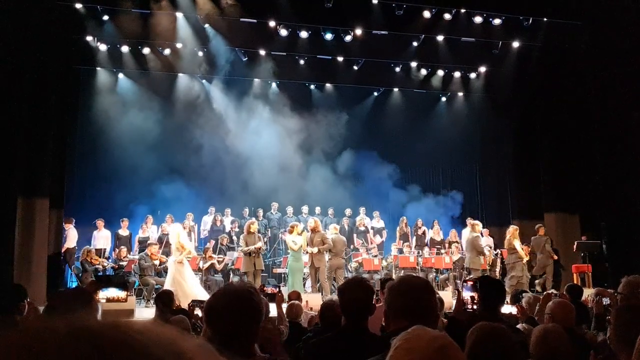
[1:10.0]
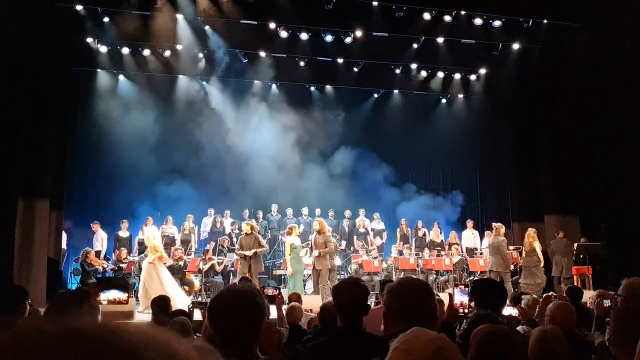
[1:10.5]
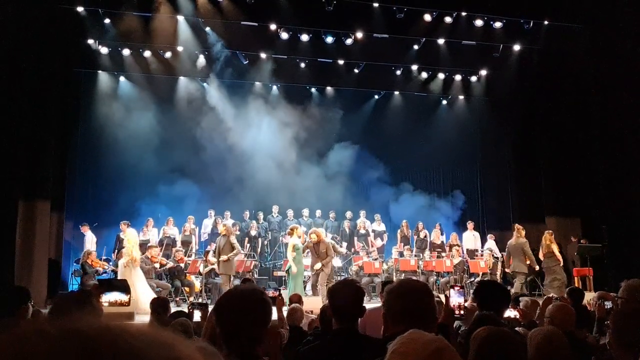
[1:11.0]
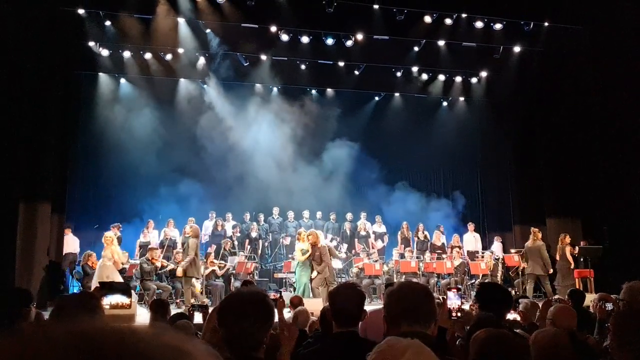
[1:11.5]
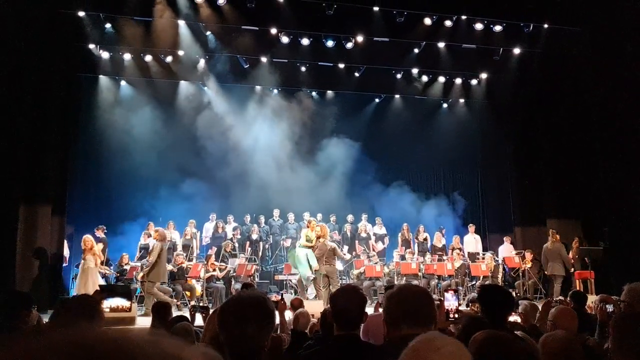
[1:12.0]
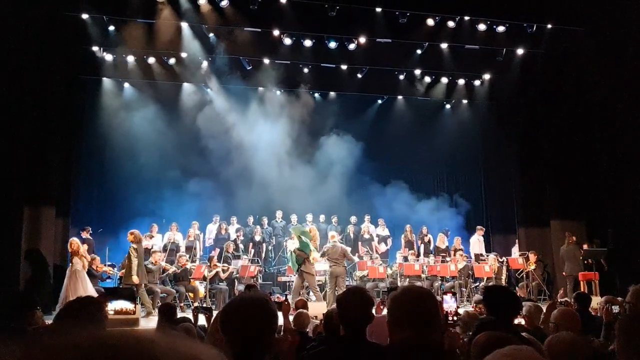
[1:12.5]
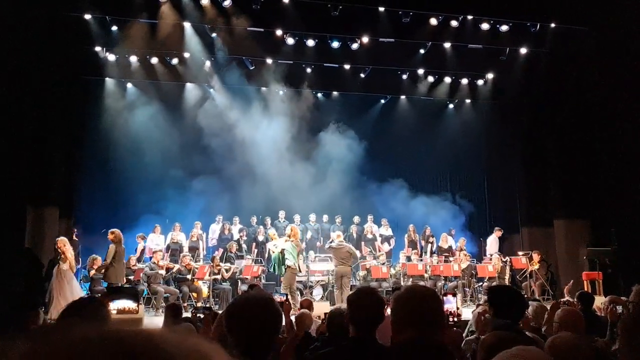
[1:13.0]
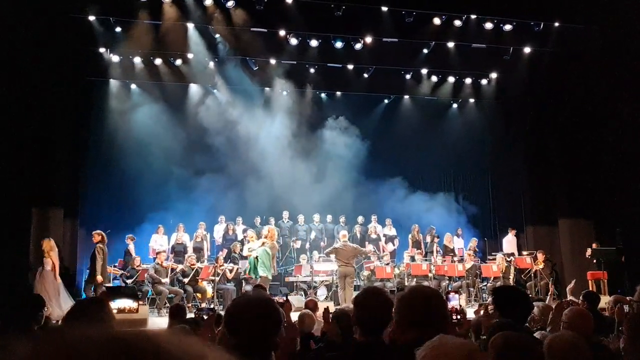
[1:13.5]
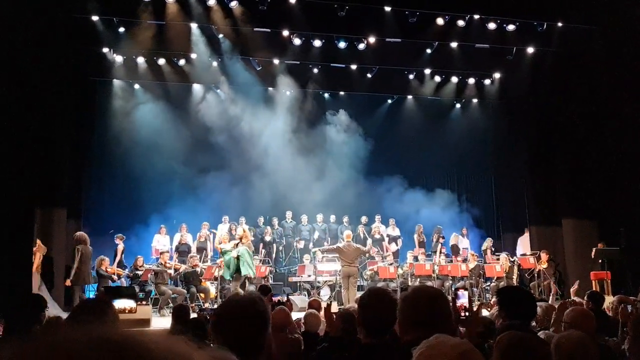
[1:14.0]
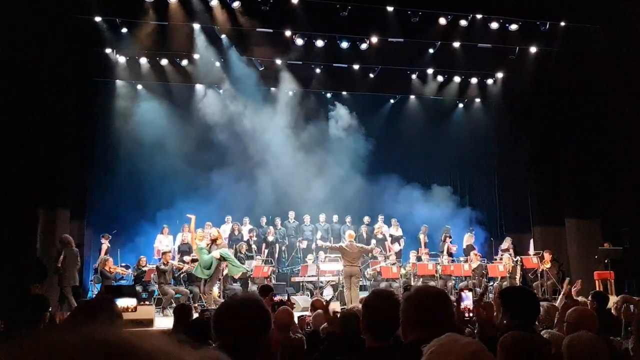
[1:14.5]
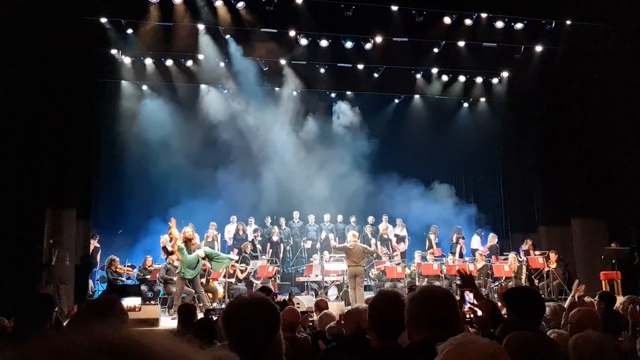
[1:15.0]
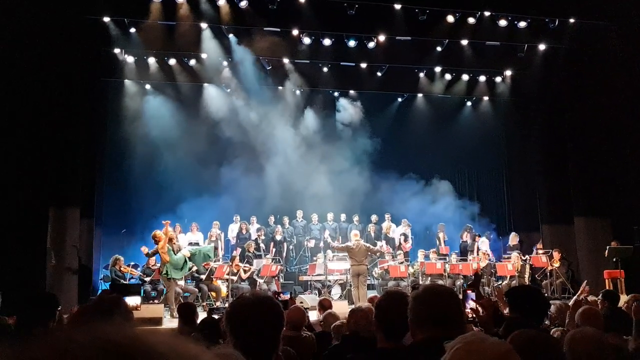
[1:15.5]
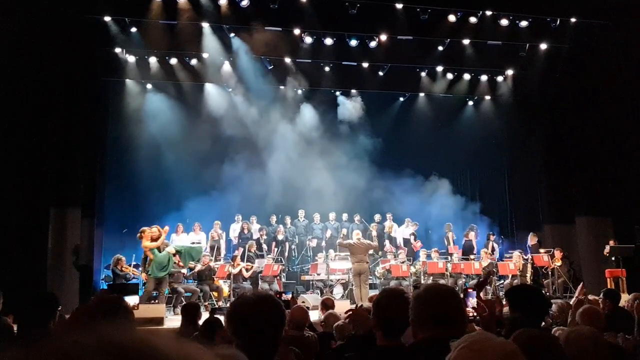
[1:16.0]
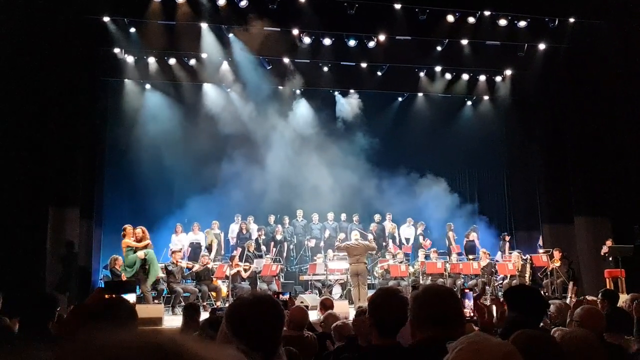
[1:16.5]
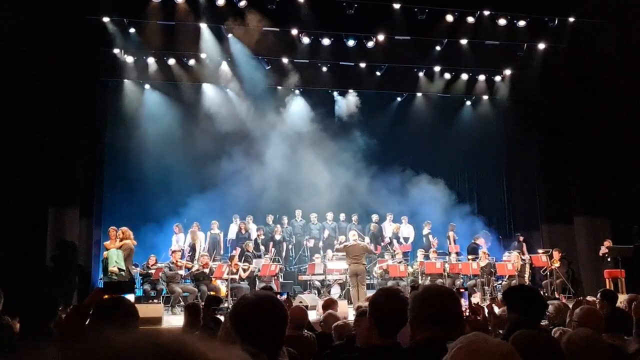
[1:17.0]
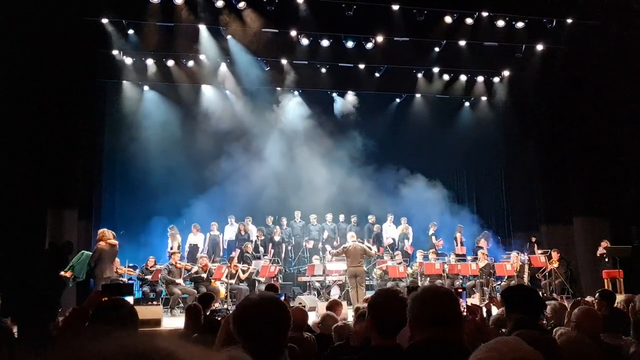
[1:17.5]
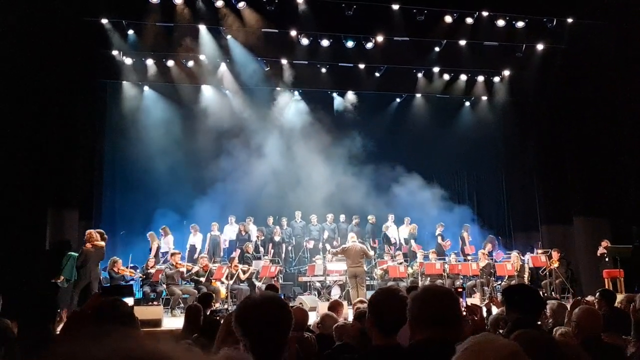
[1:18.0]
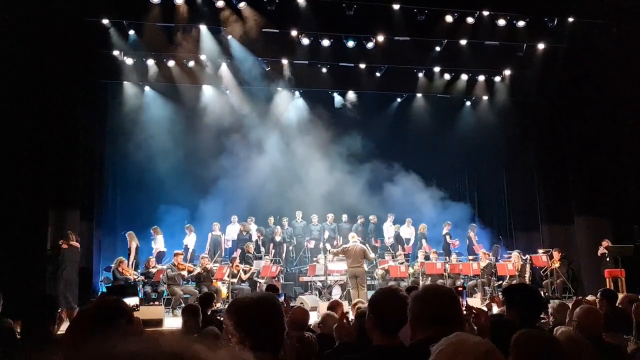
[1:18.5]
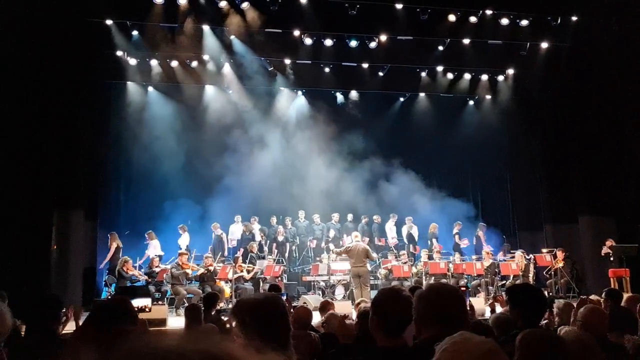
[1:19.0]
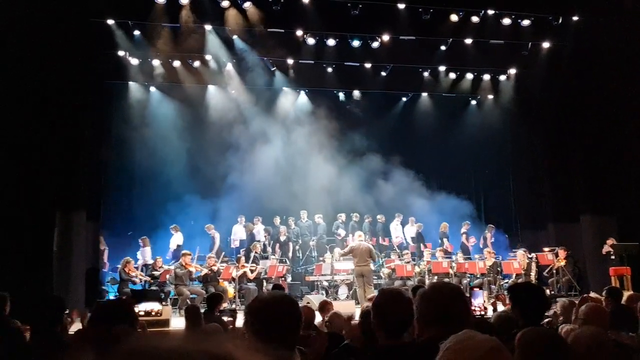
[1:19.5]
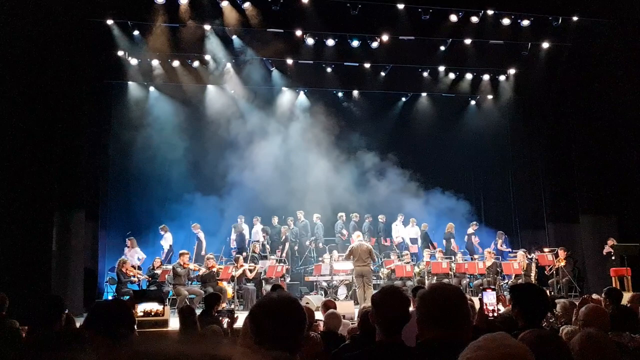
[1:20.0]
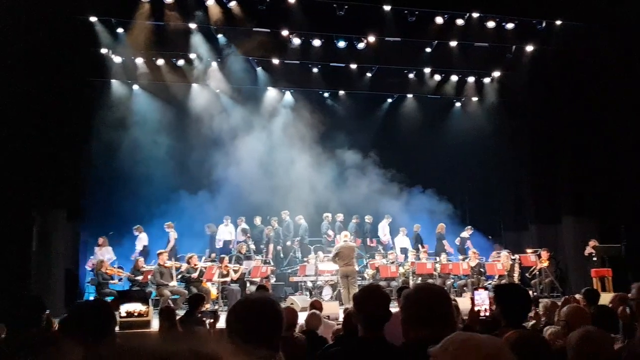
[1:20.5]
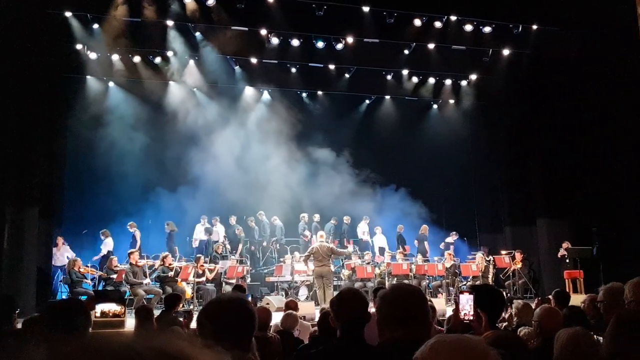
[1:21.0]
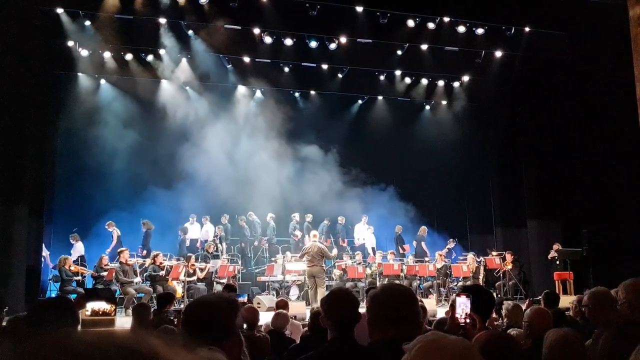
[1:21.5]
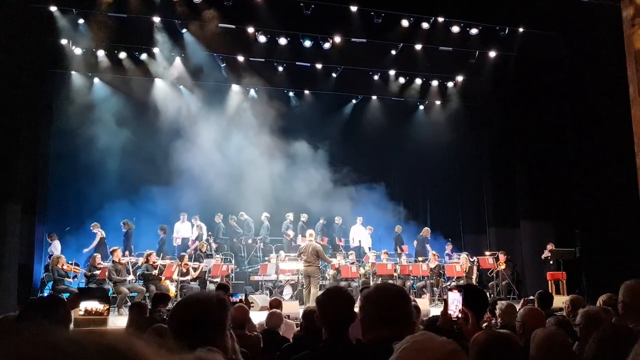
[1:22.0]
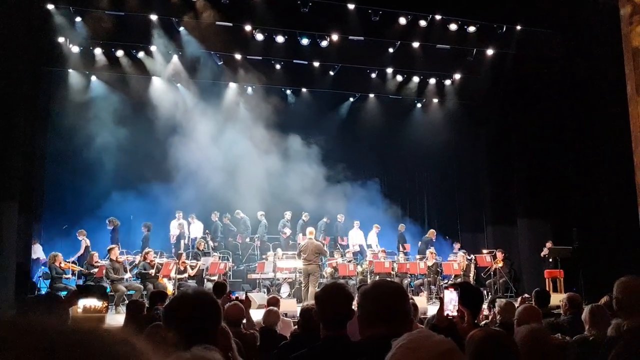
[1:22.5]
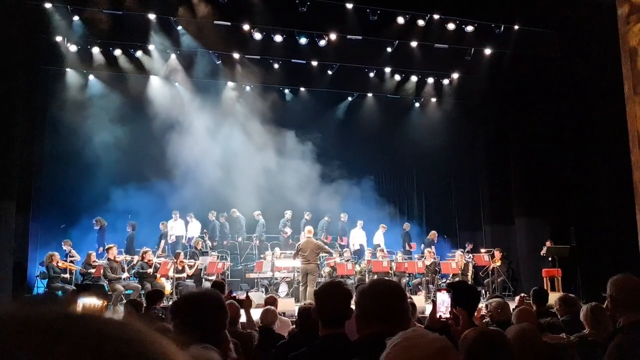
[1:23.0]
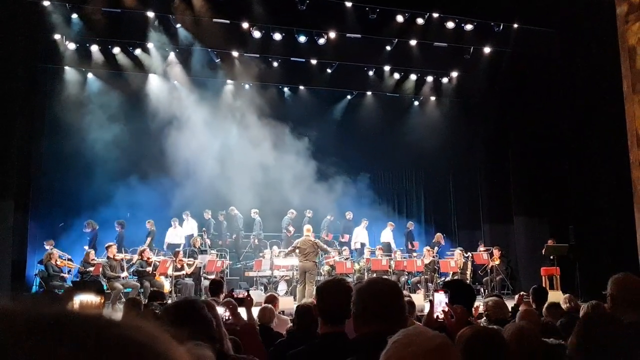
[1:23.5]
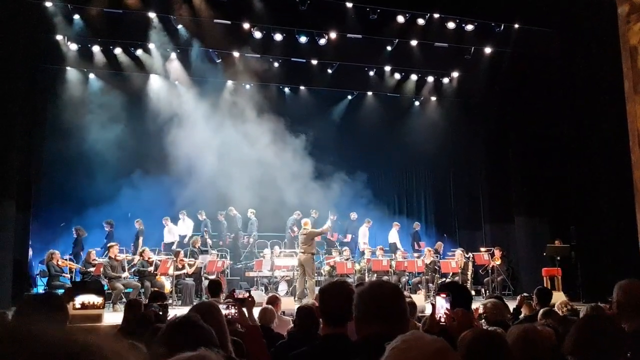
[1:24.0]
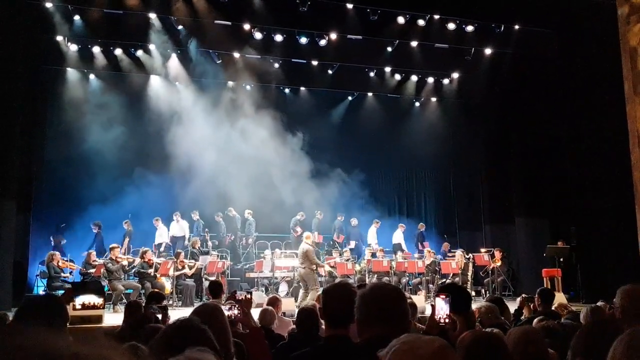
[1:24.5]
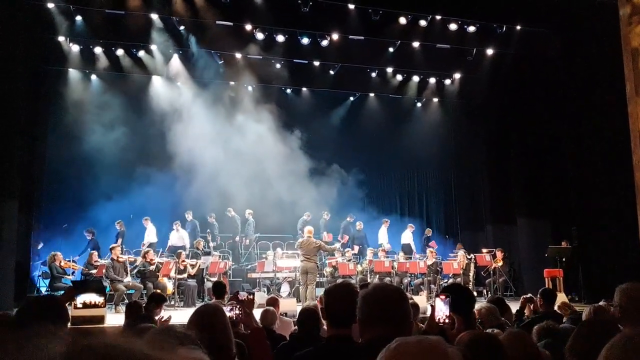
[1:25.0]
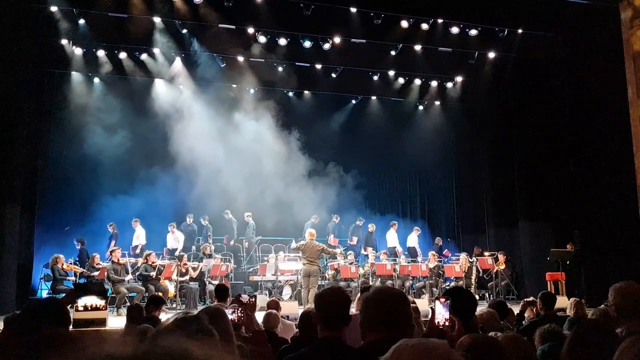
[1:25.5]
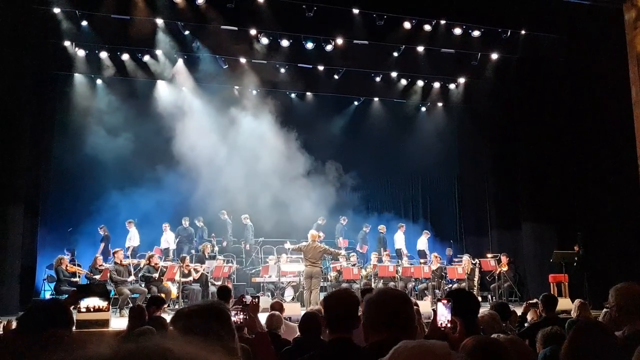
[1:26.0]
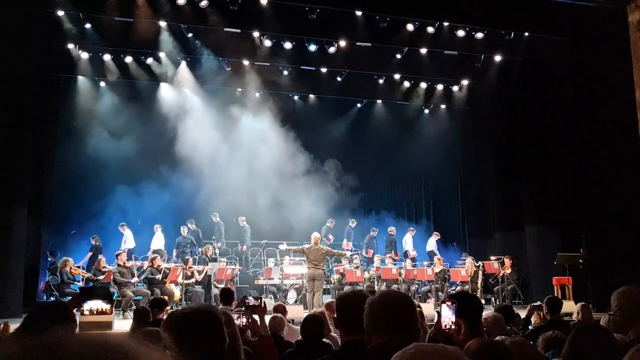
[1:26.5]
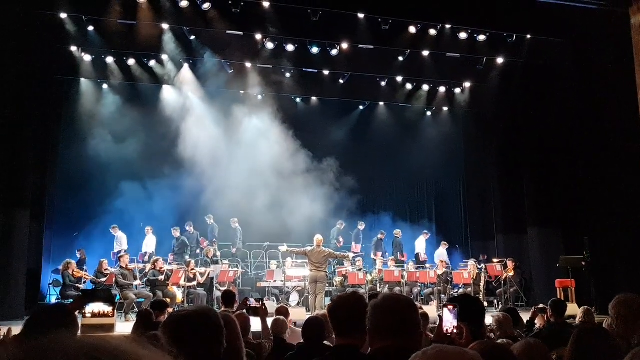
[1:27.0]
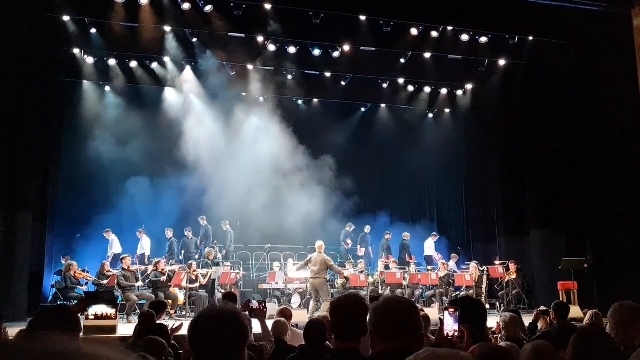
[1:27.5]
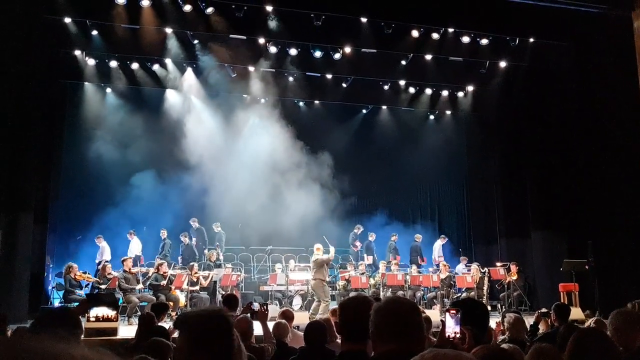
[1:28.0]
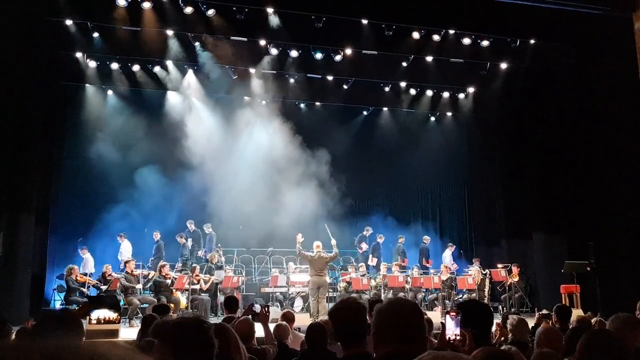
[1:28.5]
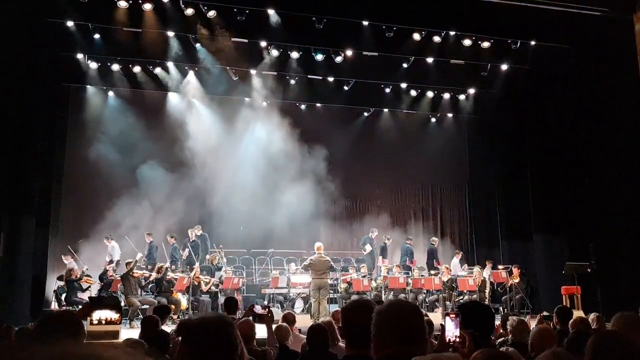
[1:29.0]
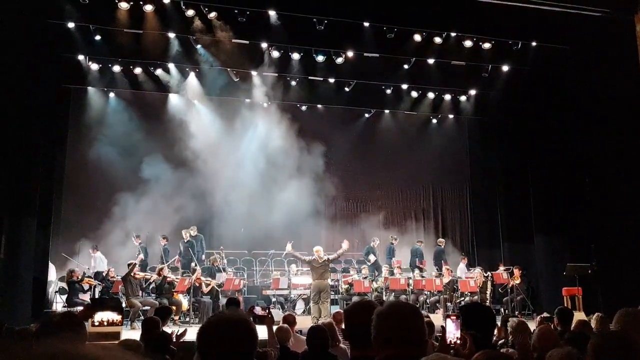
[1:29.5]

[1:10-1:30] The musicians at the front, probably the singers, leave the stage in a dramatic fashion. A girl in a long green dress gets special attention: she is carried out by one of the long-haired men. The choral members in the background also start to walk off the stage, leaving mainly the seated musicians, with stringed instruments and maybe some horn players and a drummer, who appear to still be performing. The venue looks quite full.